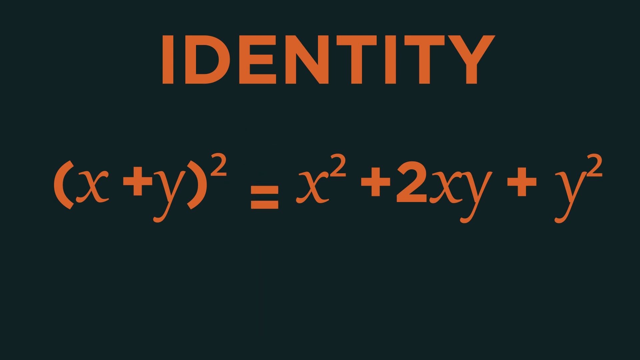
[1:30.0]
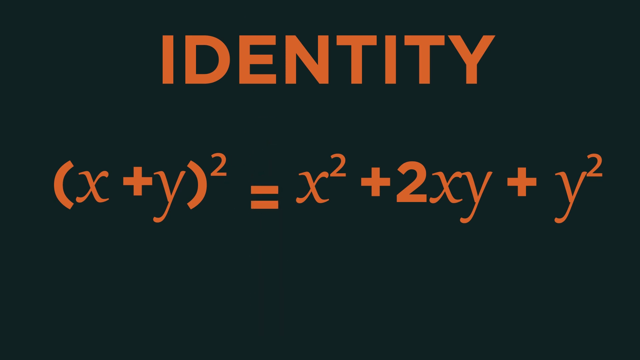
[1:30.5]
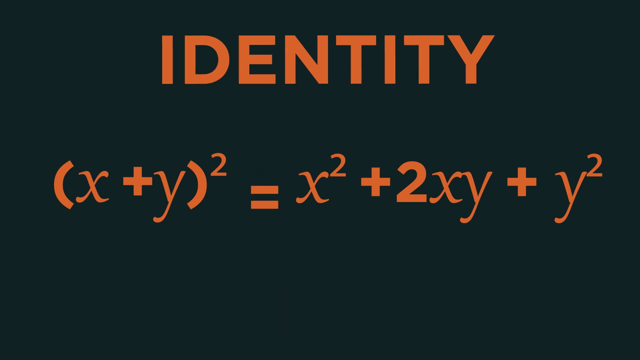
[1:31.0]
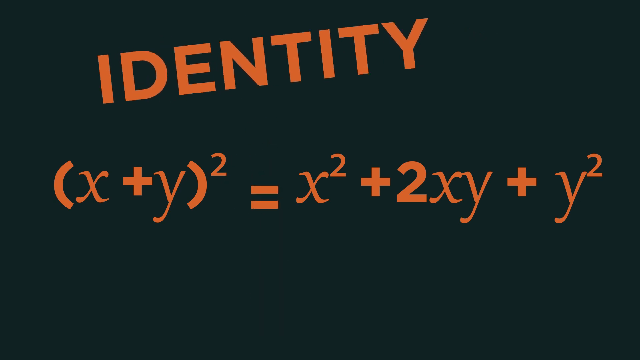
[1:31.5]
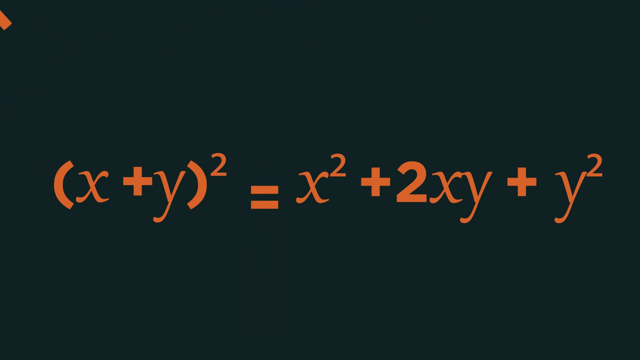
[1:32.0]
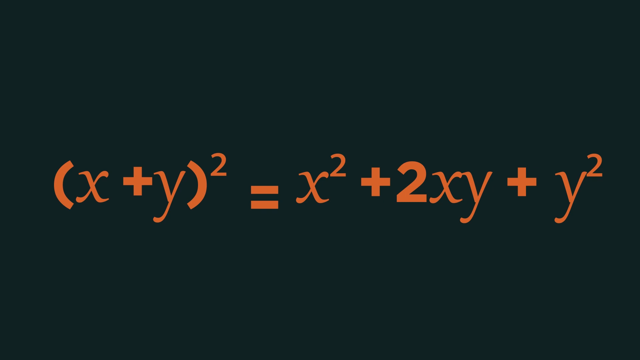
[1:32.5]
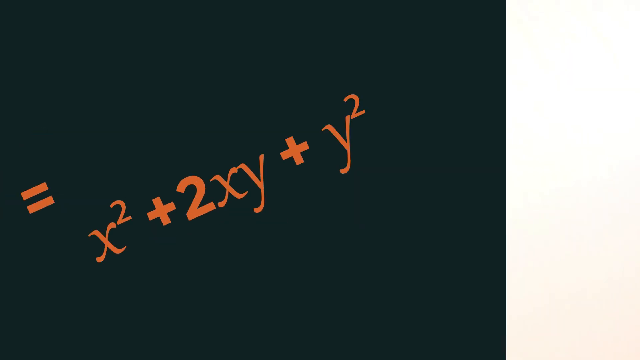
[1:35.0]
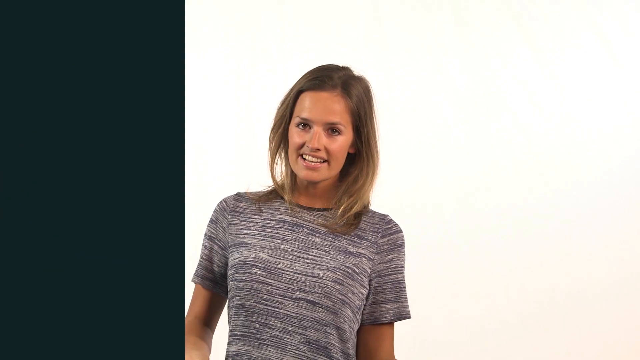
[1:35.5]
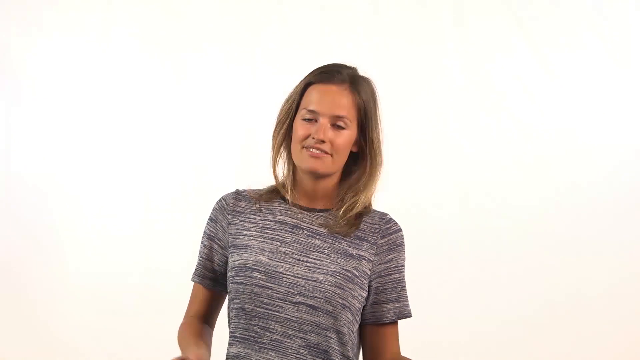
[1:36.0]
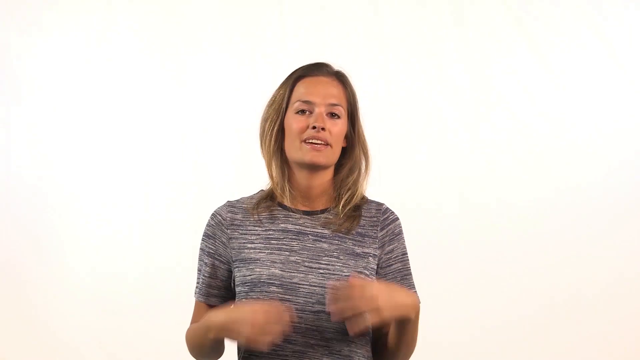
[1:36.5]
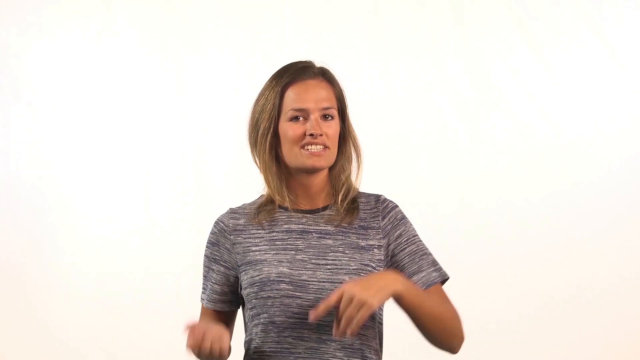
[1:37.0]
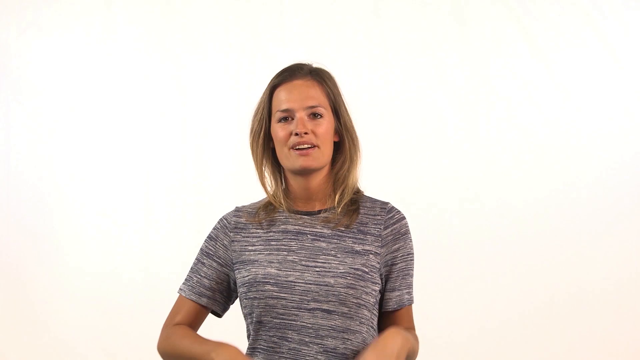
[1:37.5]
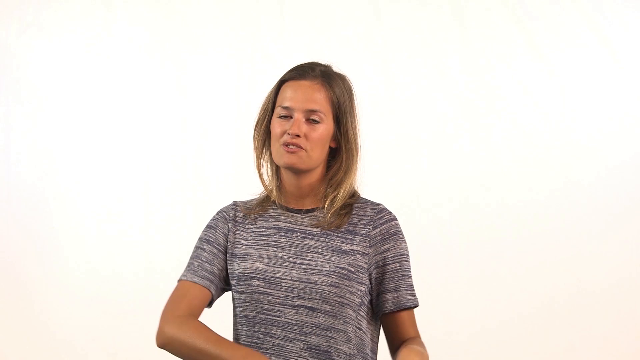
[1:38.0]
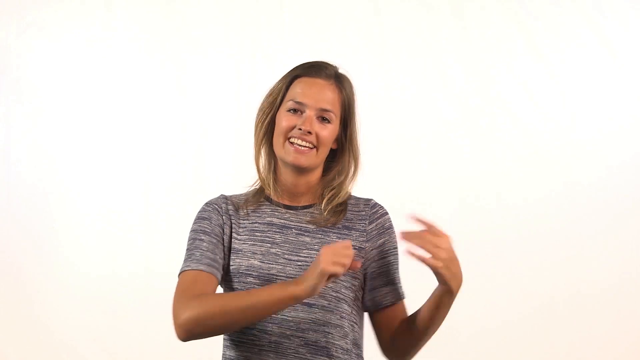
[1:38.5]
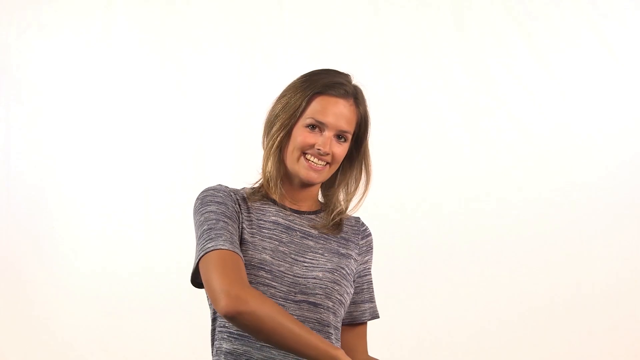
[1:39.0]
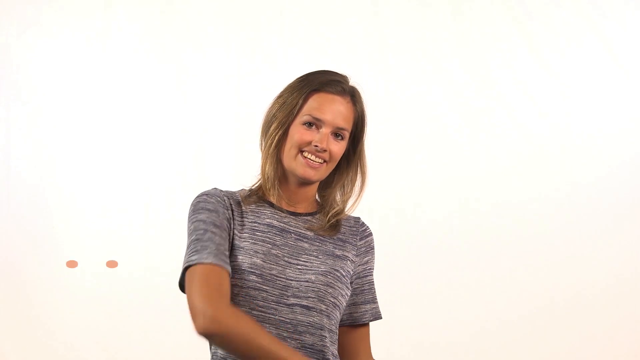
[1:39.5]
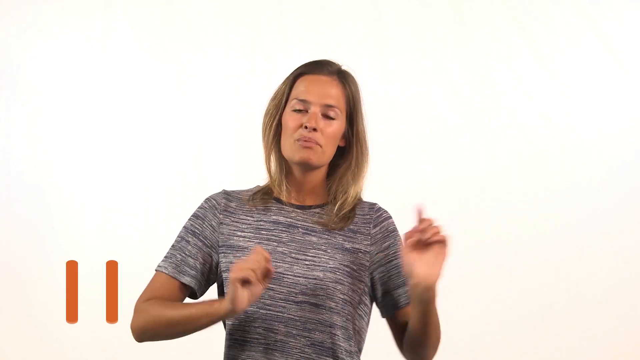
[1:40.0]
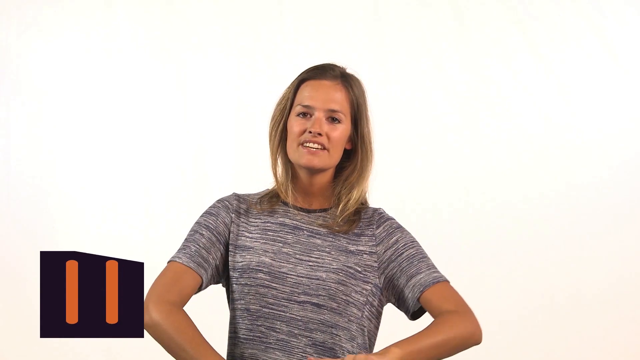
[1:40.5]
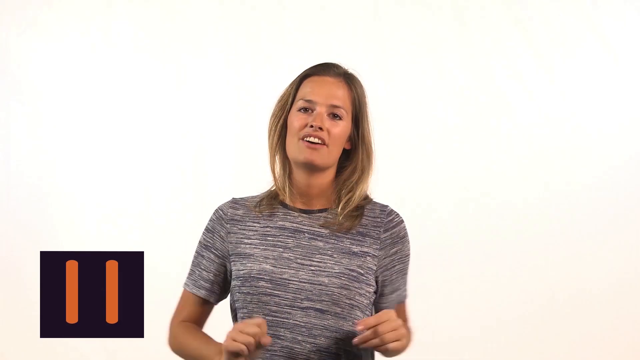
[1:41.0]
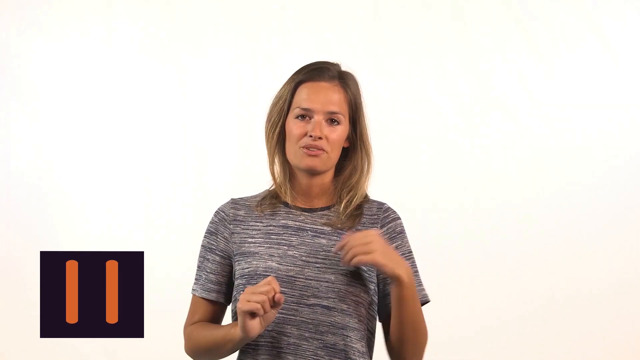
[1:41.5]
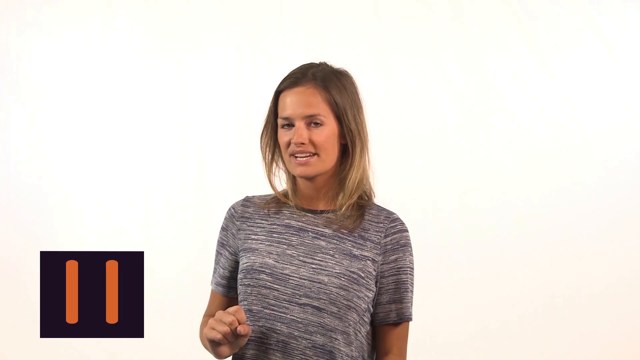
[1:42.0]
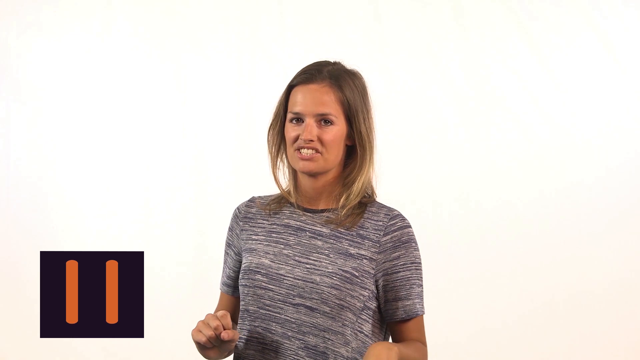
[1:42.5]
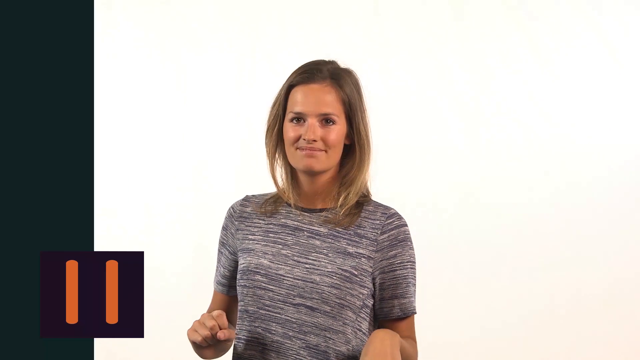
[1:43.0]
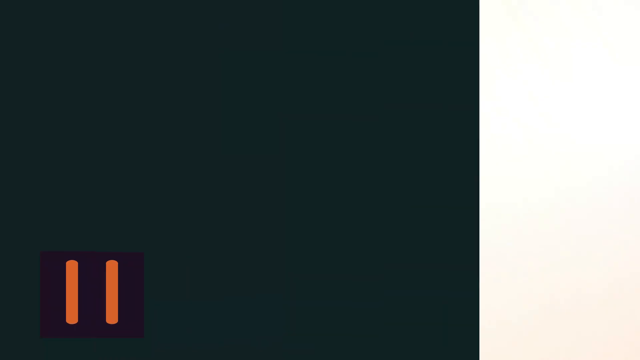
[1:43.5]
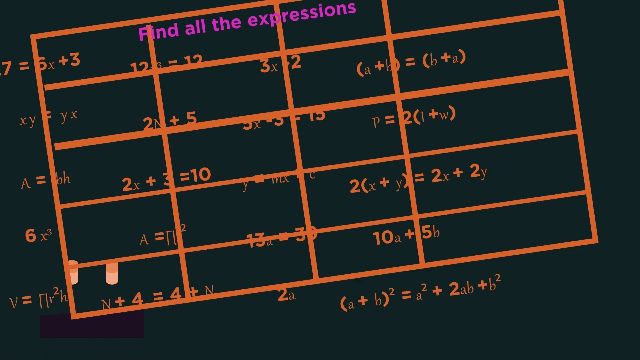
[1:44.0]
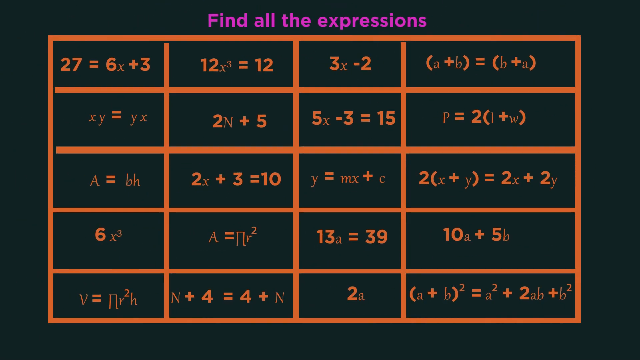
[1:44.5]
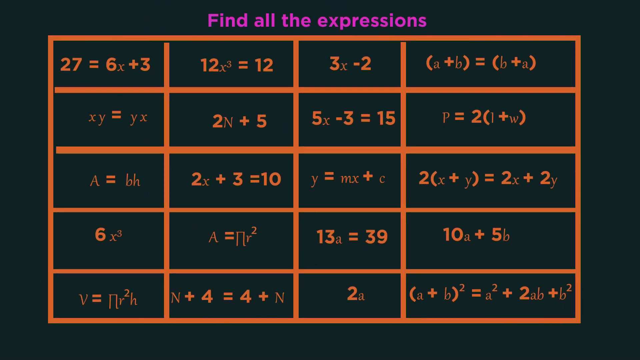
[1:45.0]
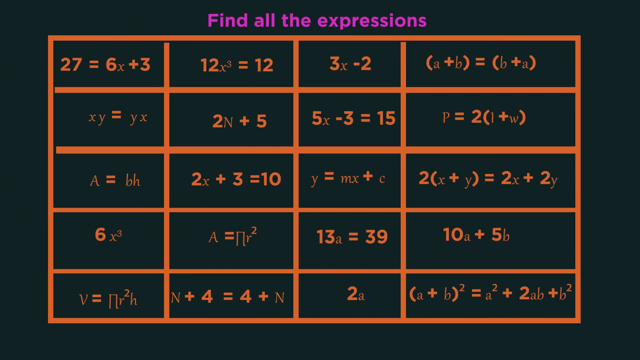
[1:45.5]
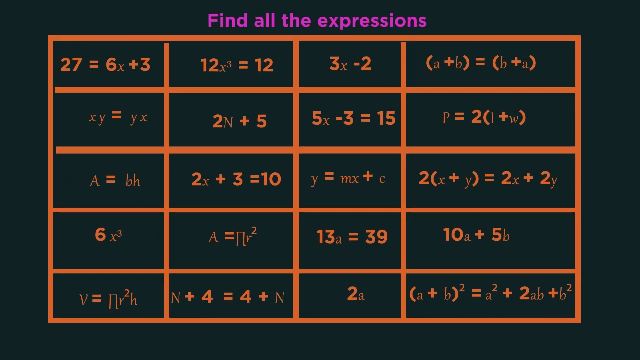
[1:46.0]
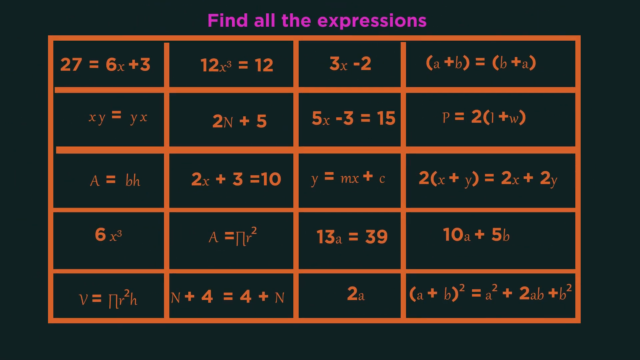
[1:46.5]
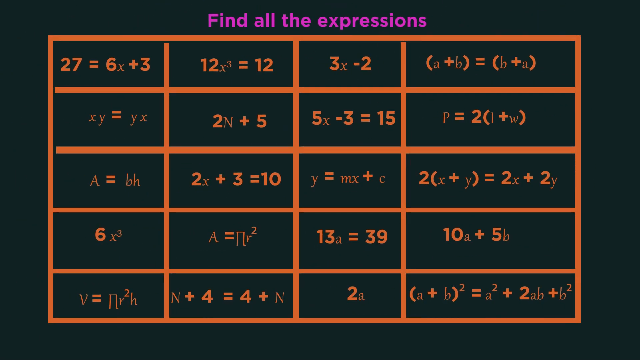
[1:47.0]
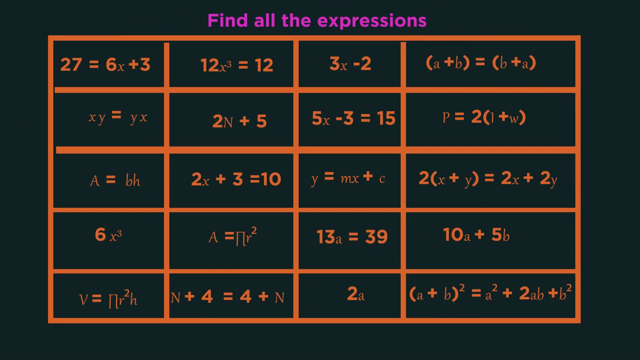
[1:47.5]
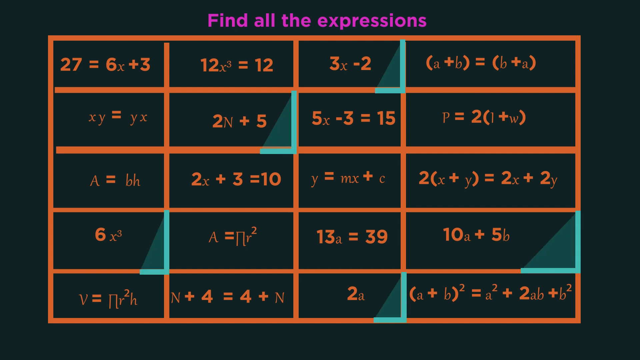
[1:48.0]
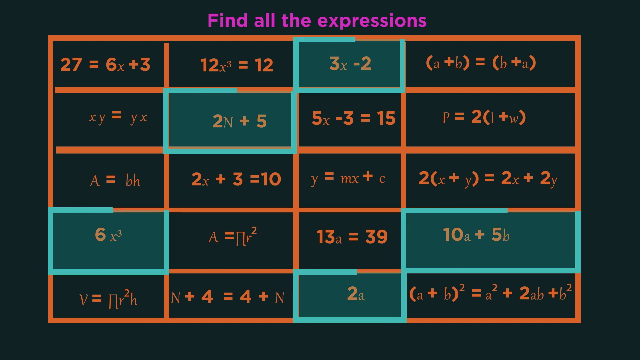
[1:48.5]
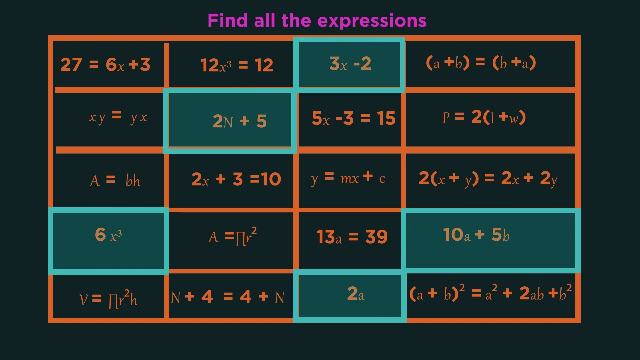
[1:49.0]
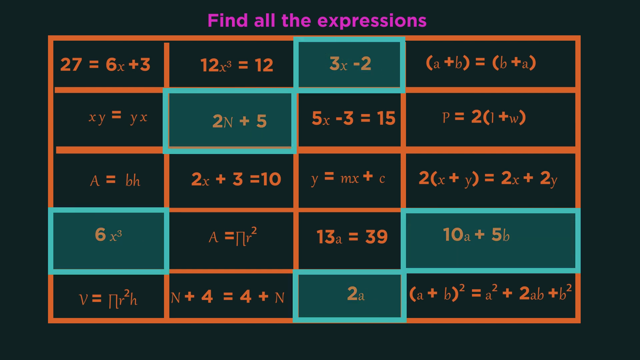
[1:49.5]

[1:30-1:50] The title "identity" appears in orange text on a black background. The identity text and the rest of the equation swipe to the left along with the black background, revealing a white girl in a gray shirt speaking against a white background. A grid of different equations then slides in from the left on a black background, titled "find all the expressions" in pink, and green boxes highlight some of the equations.